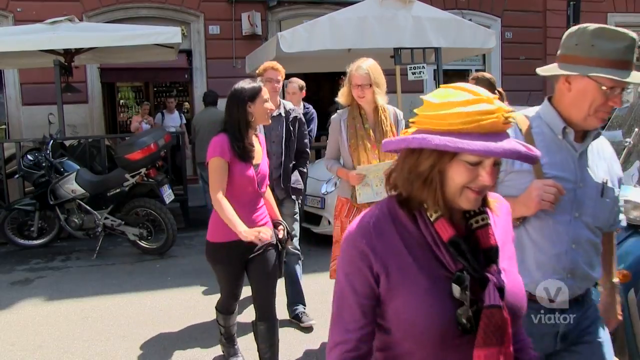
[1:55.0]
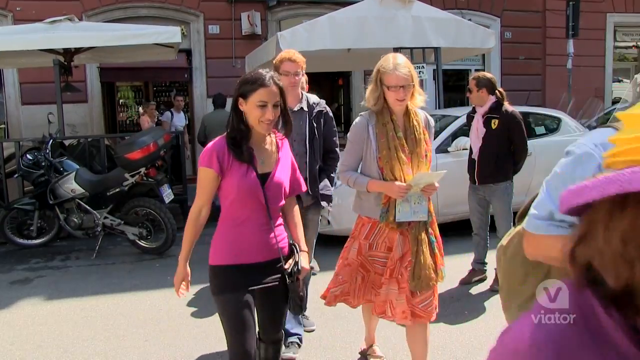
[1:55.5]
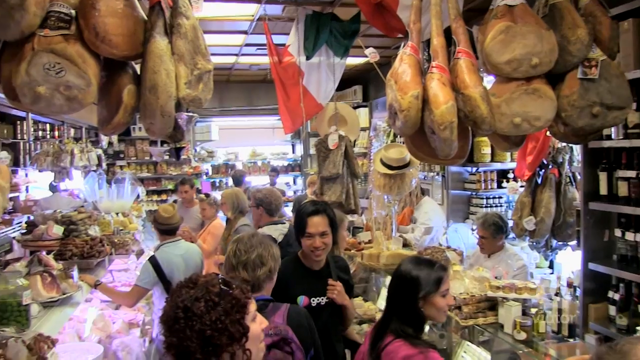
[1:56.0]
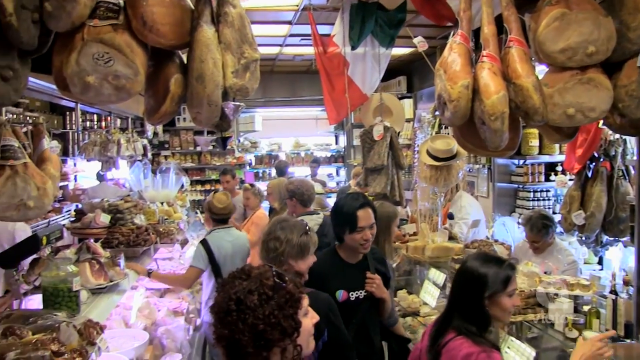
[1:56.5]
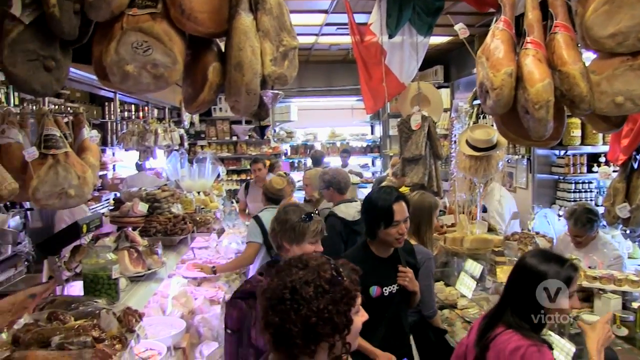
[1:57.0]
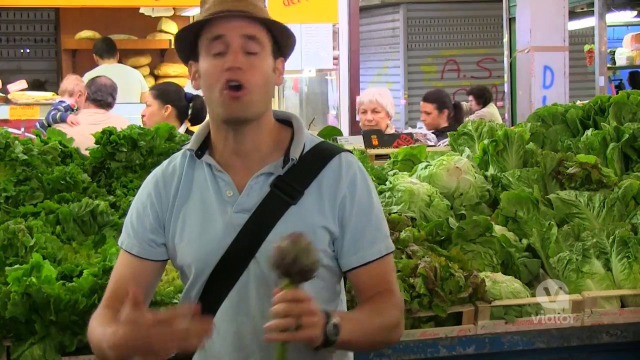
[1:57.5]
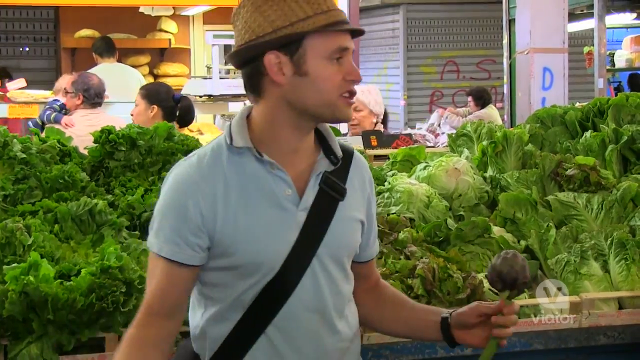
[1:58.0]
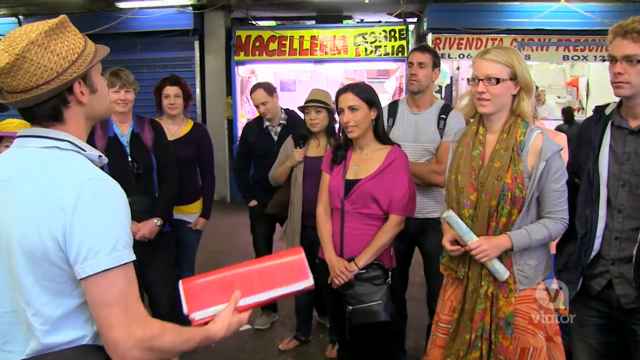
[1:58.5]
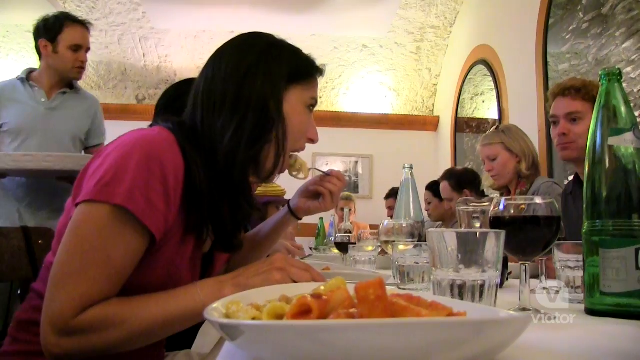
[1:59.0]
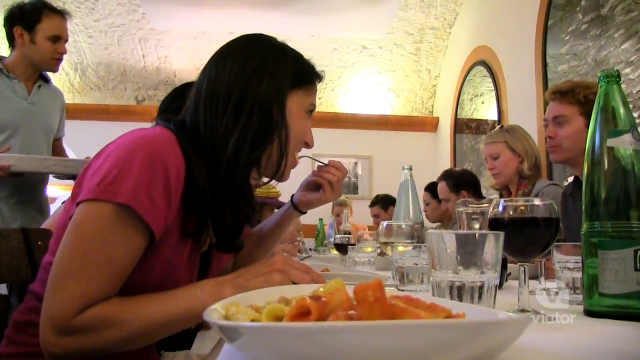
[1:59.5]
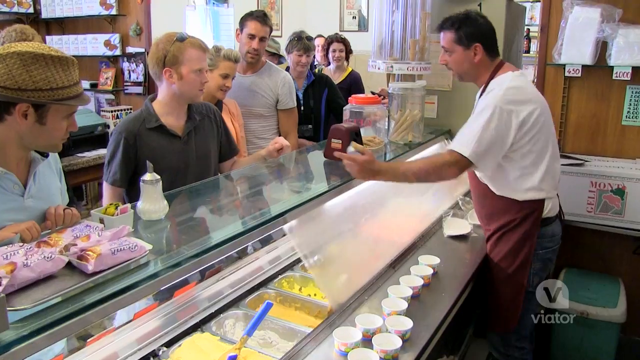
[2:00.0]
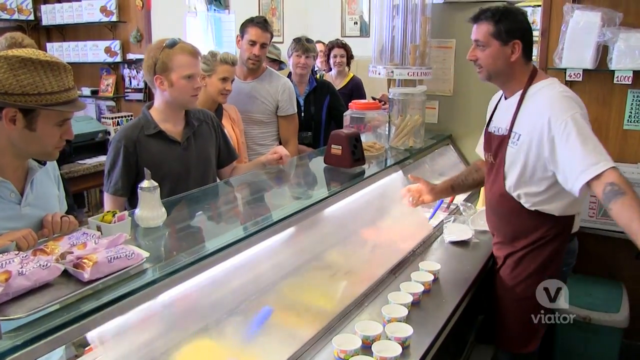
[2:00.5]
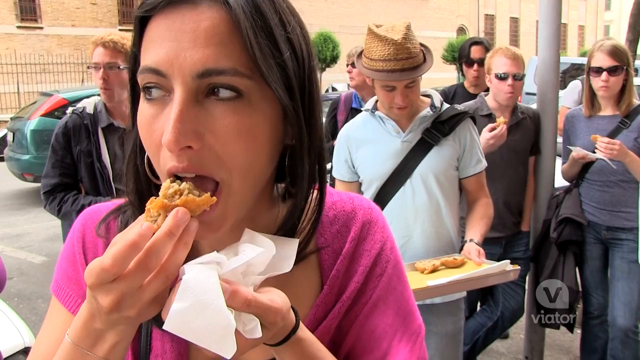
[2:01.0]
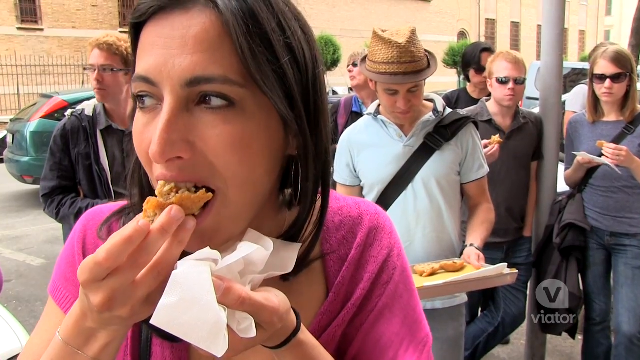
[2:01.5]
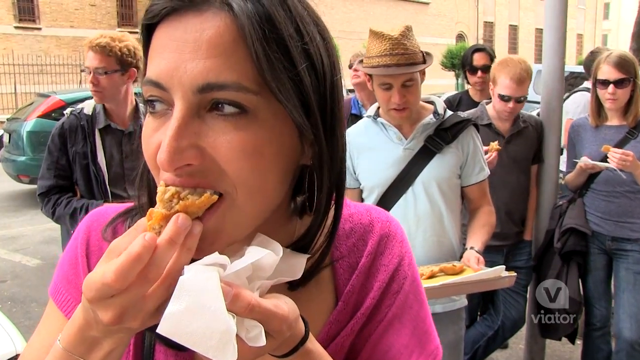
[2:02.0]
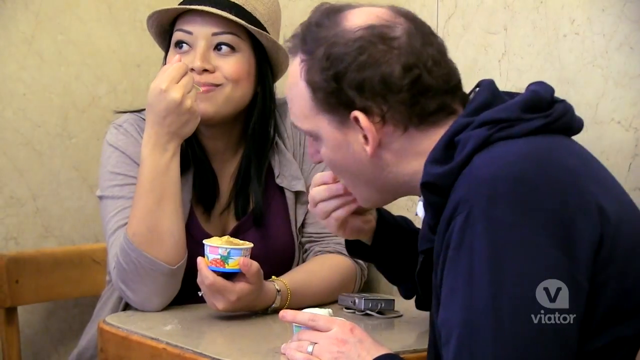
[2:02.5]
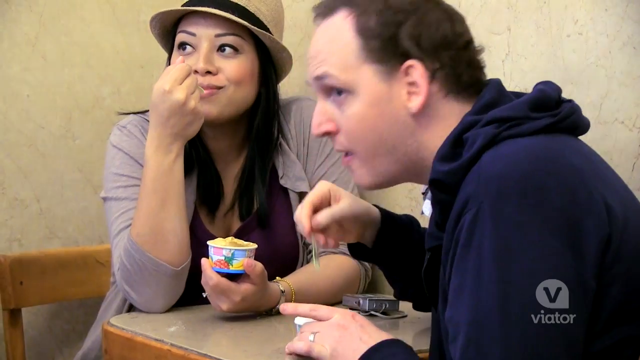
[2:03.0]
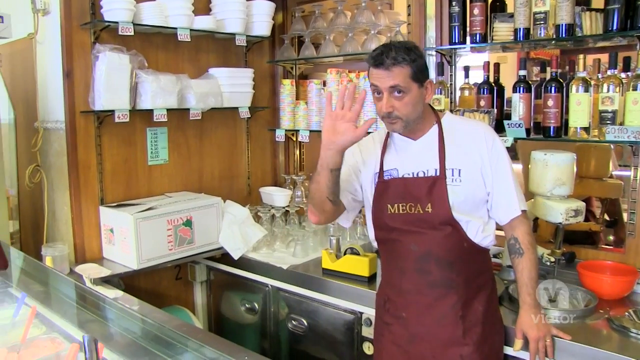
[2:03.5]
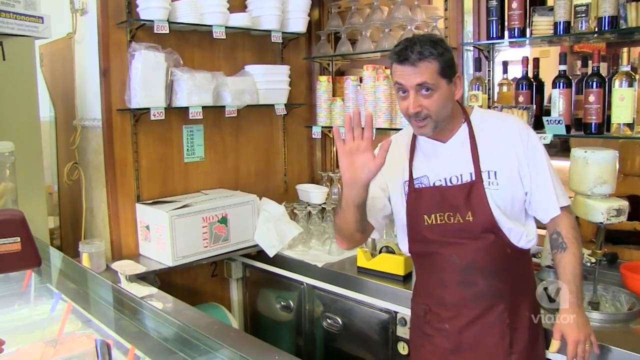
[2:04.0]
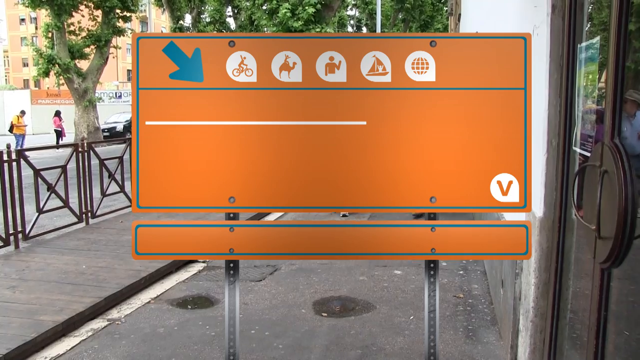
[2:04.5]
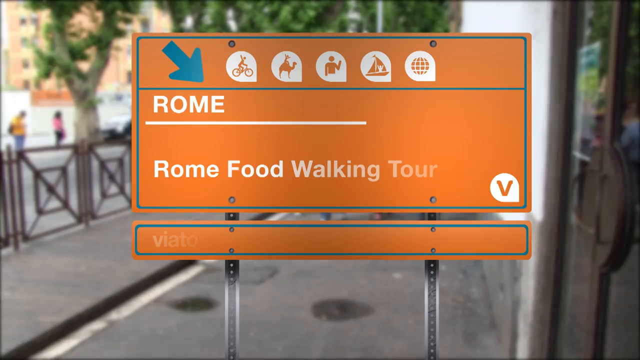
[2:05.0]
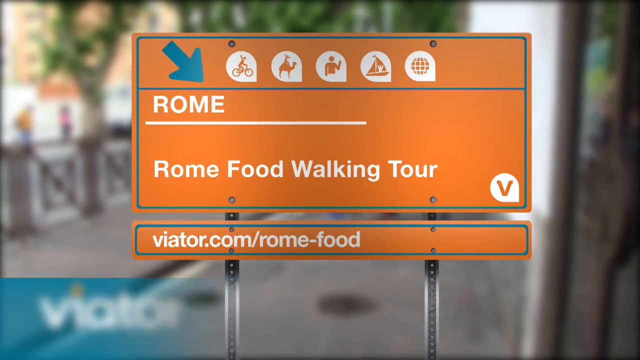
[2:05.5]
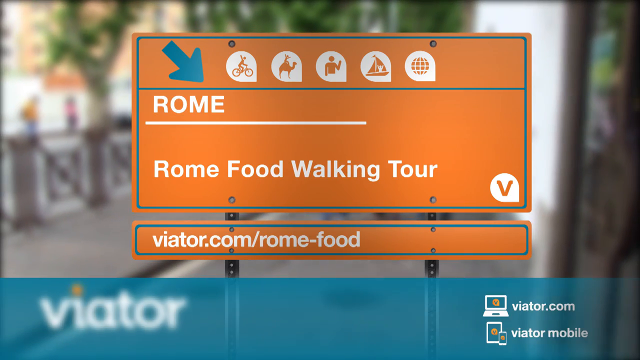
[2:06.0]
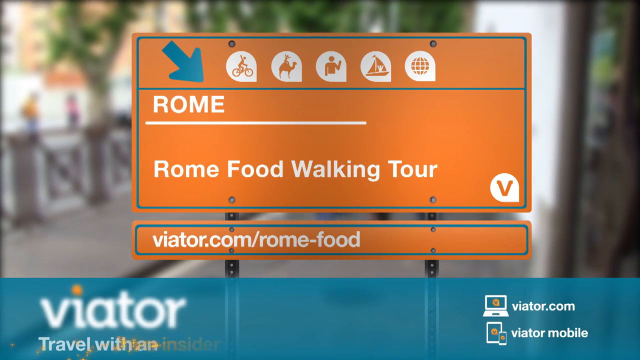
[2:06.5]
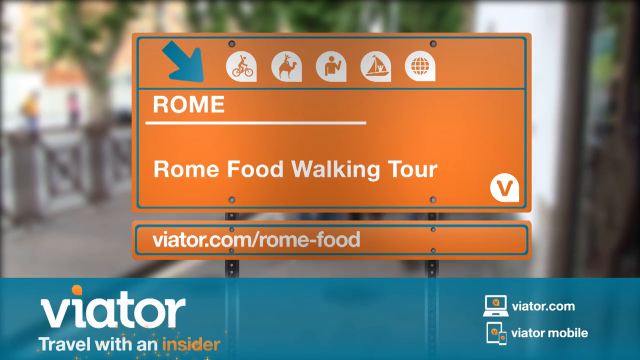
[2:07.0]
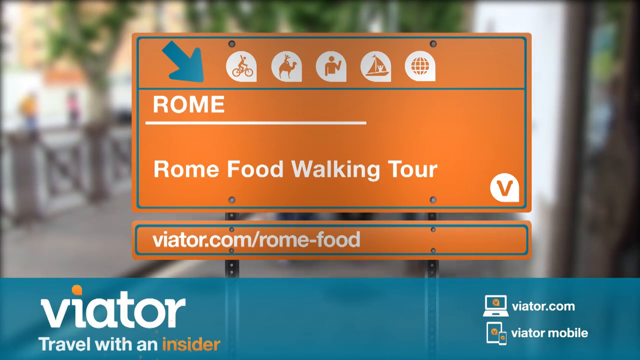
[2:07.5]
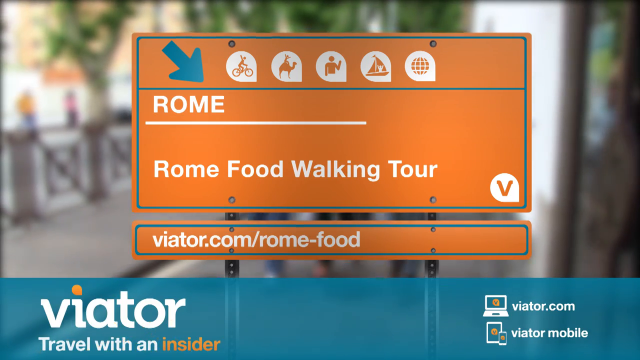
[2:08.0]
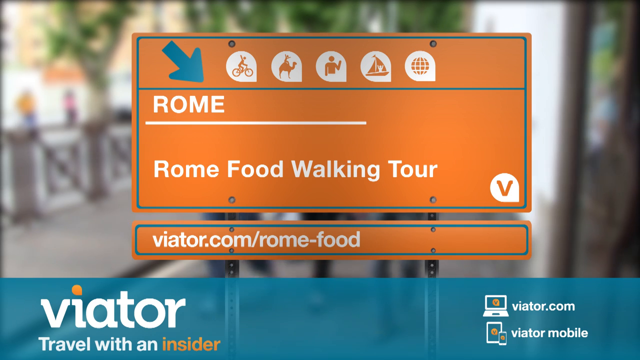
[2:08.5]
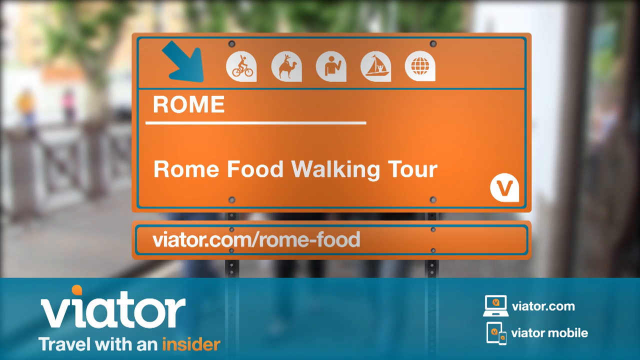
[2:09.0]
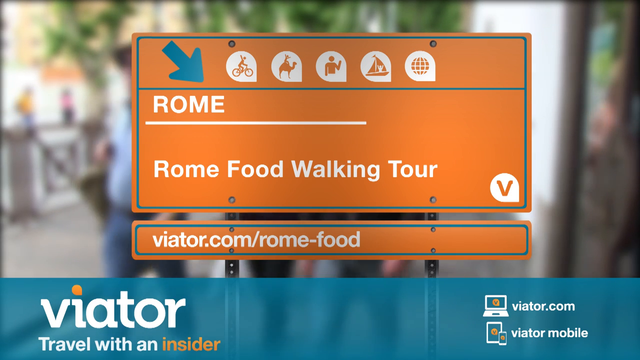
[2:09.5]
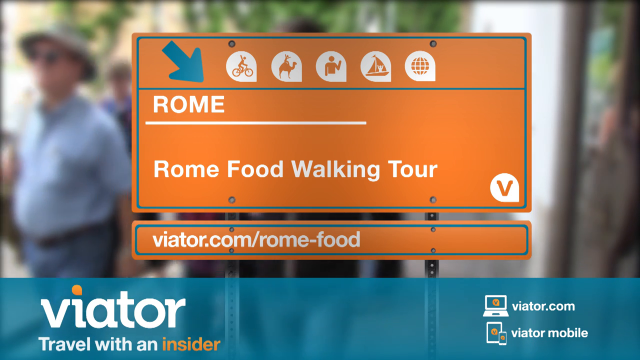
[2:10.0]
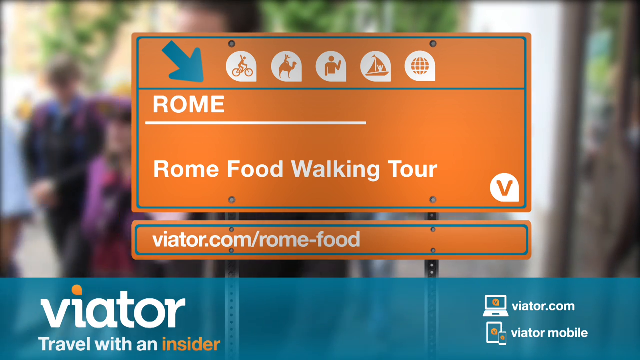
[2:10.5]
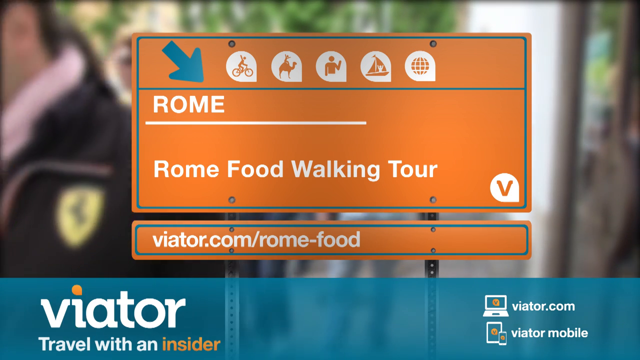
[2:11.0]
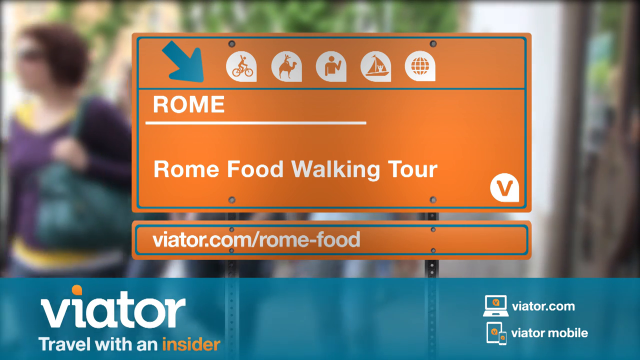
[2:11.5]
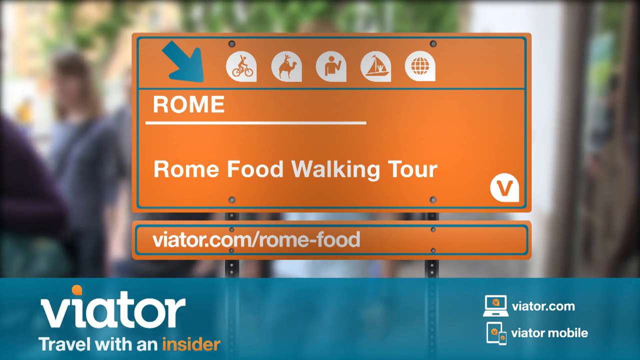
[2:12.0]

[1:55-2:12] A group of people walks. An orange banner in the middle of the screen reads "Rome walking tour". People eat, including a couple. A man in a maroon apron serves gelato to people. A man with a brown hat talks to an audience while holding something in his hand that appears to be some sort of greenery or possibly a vegetable. It appears to be an outdoor festival. People sit around a table enjoying different pasta dishes.